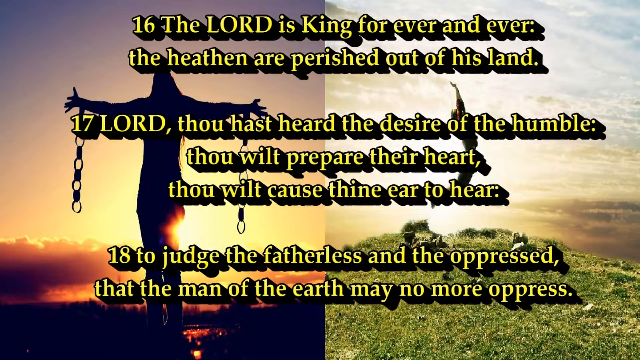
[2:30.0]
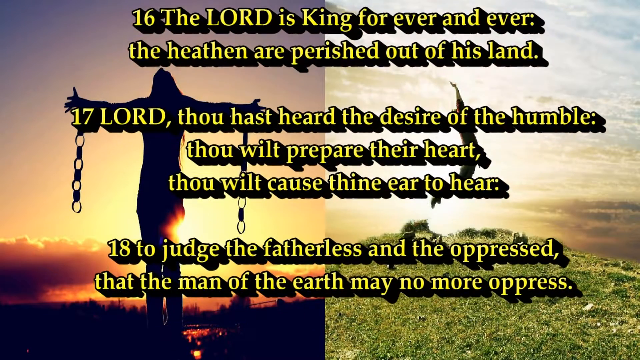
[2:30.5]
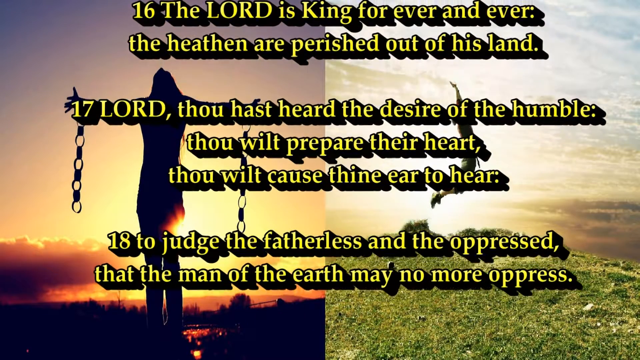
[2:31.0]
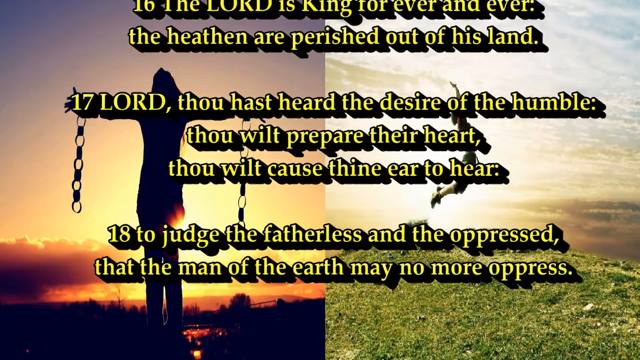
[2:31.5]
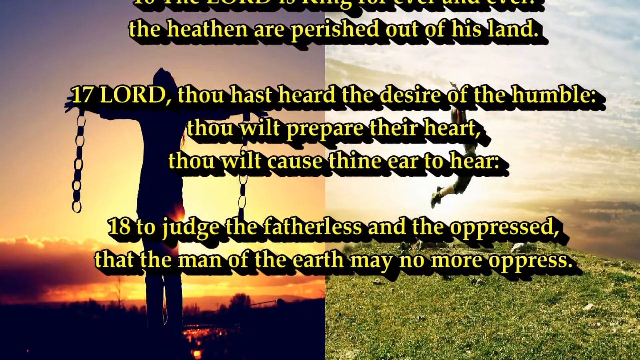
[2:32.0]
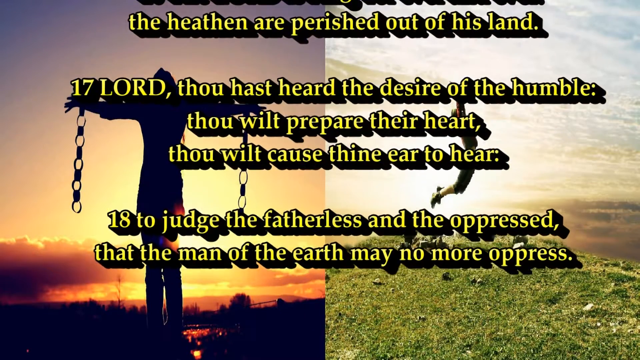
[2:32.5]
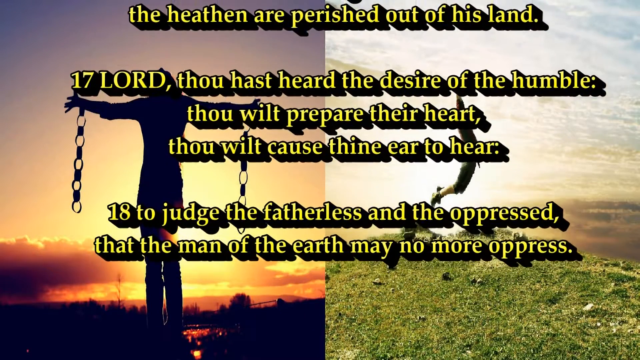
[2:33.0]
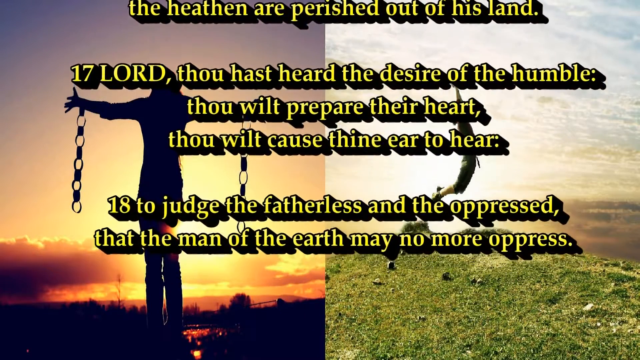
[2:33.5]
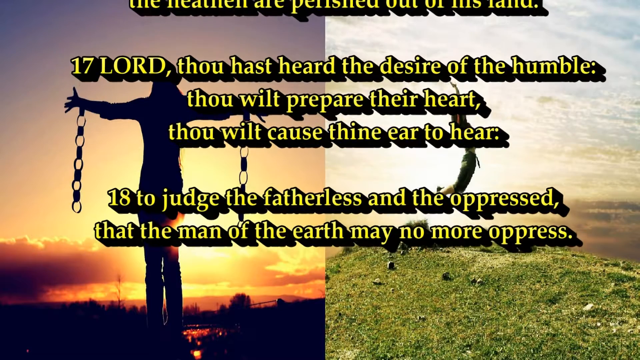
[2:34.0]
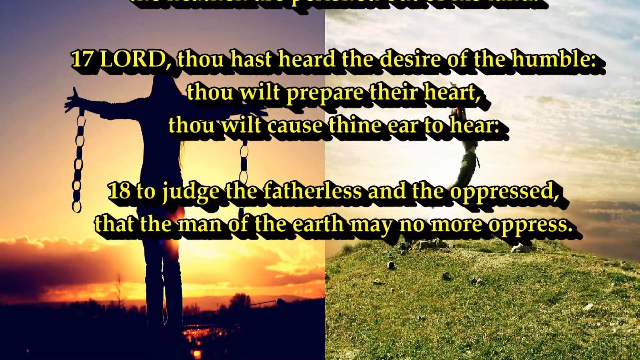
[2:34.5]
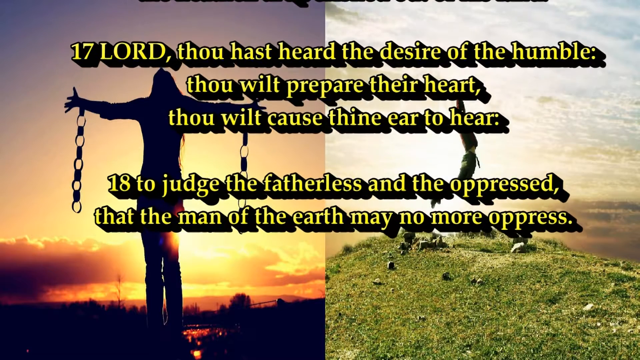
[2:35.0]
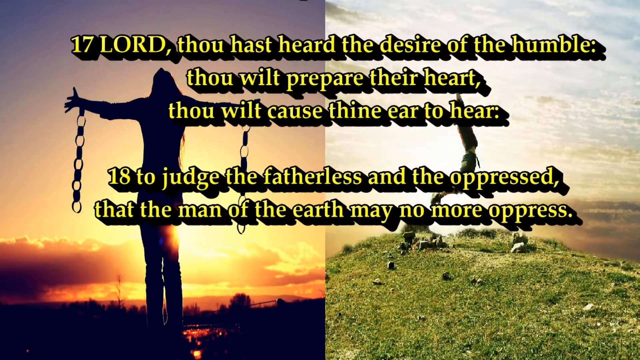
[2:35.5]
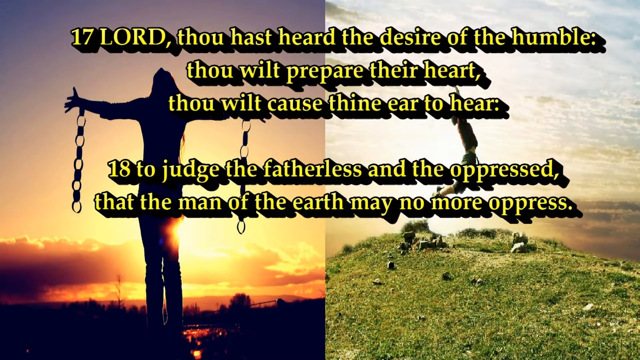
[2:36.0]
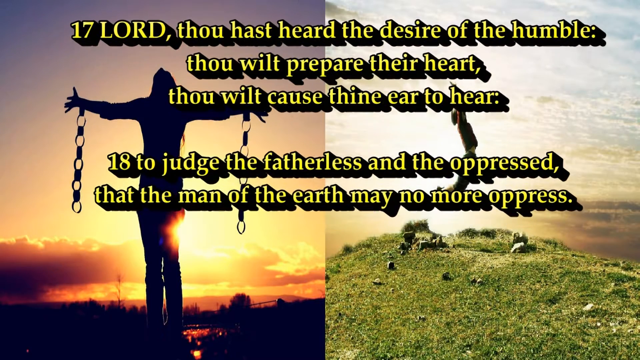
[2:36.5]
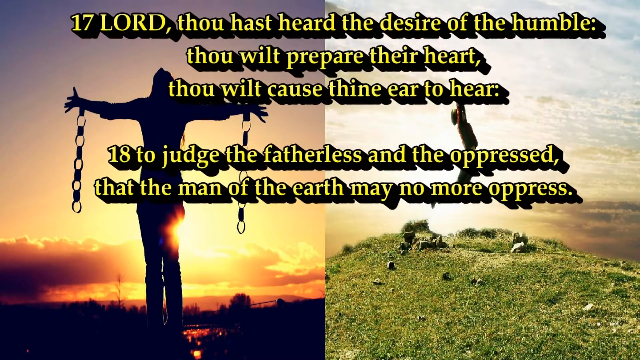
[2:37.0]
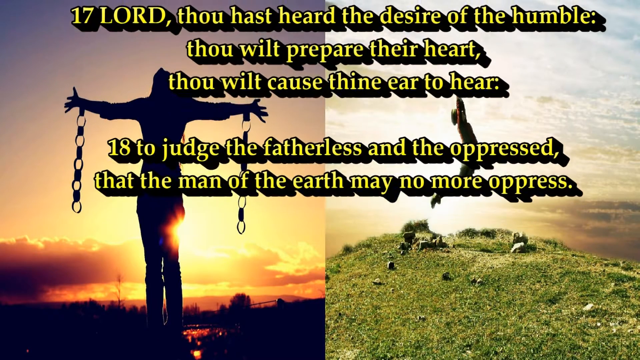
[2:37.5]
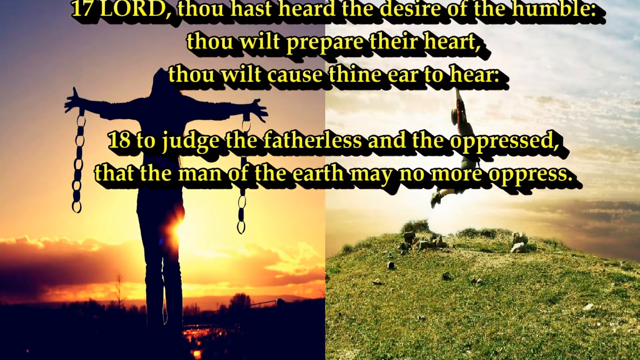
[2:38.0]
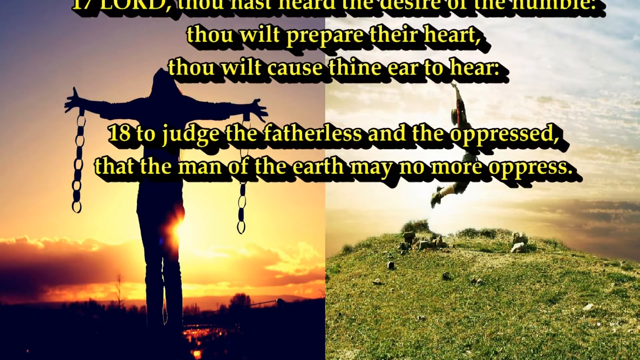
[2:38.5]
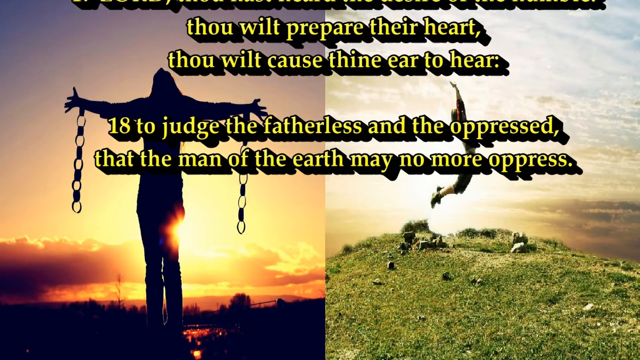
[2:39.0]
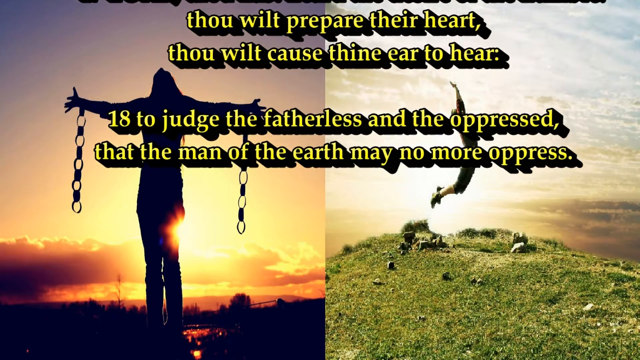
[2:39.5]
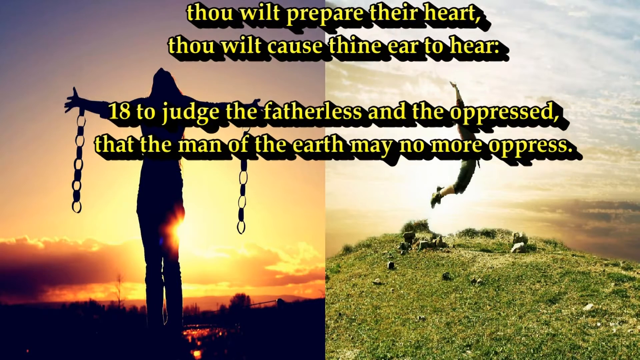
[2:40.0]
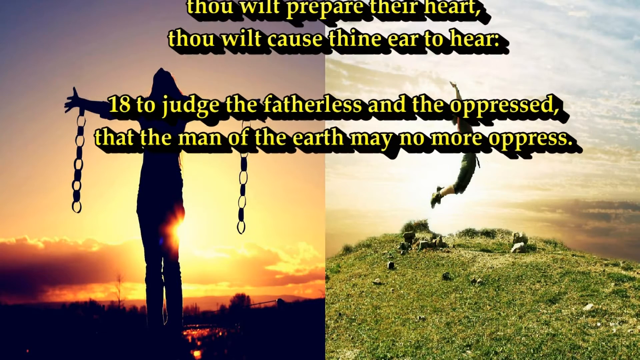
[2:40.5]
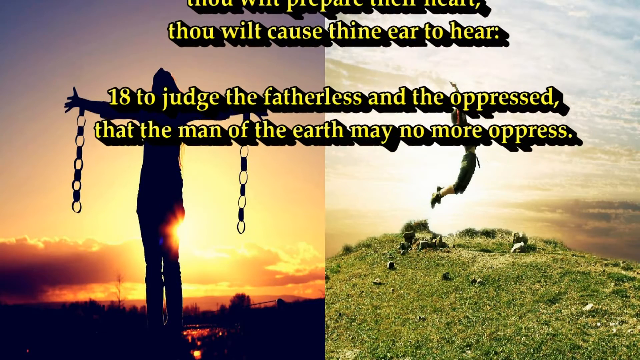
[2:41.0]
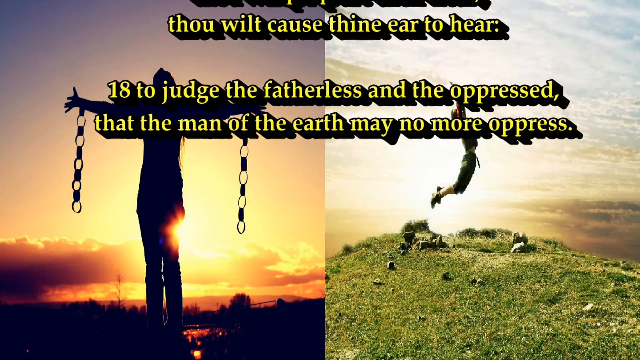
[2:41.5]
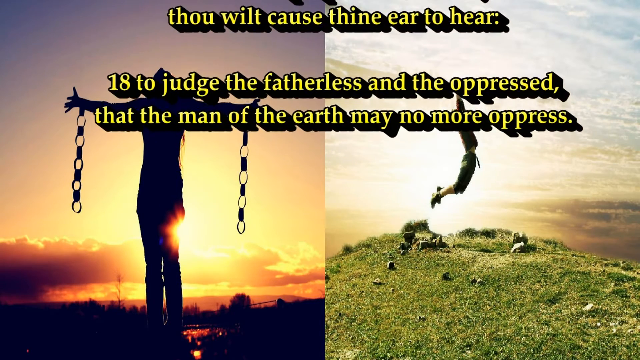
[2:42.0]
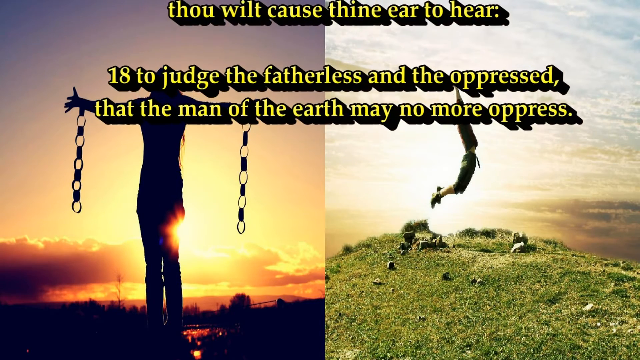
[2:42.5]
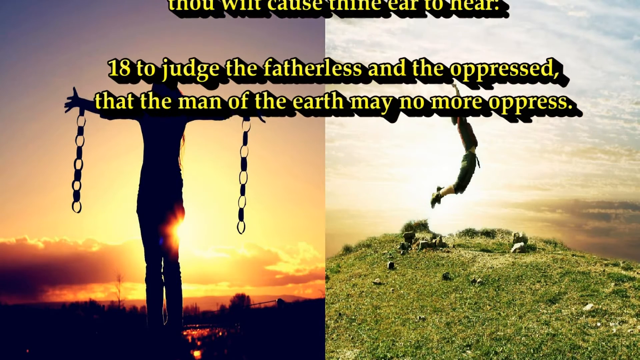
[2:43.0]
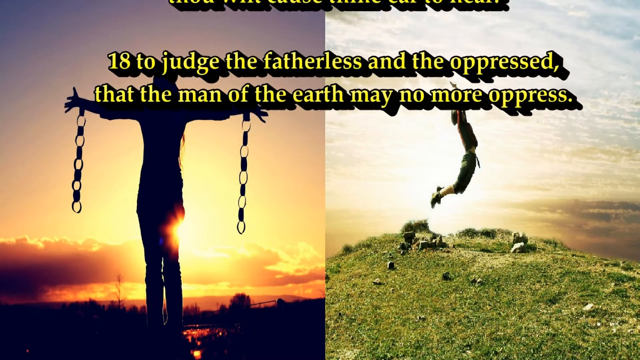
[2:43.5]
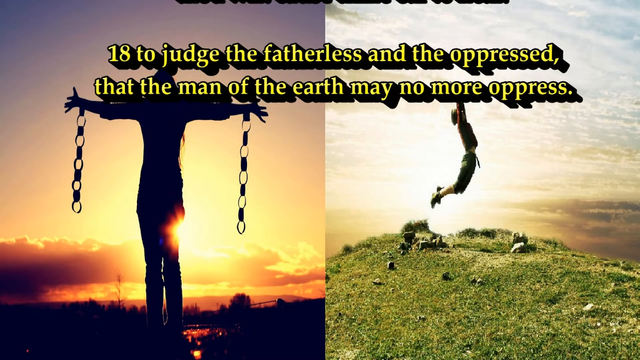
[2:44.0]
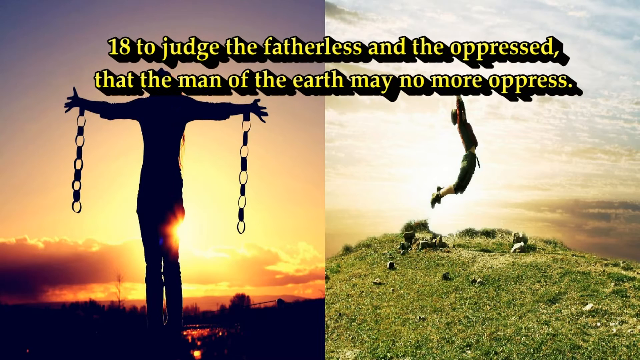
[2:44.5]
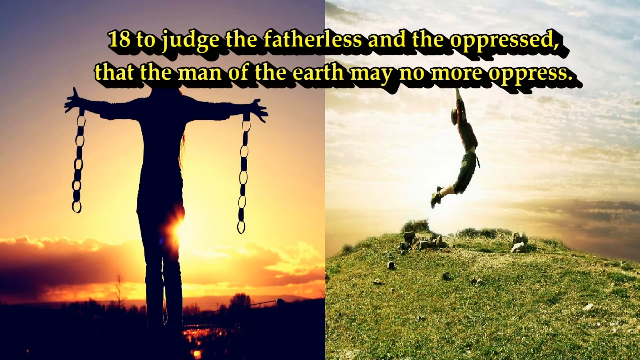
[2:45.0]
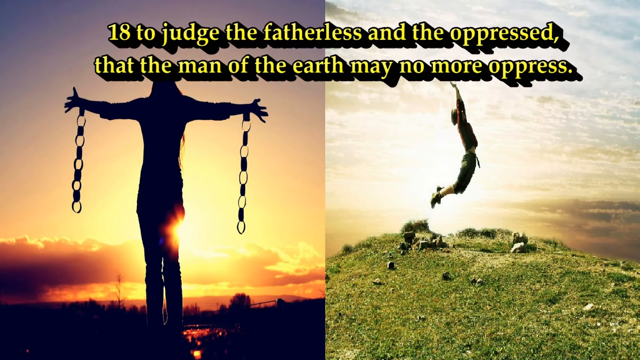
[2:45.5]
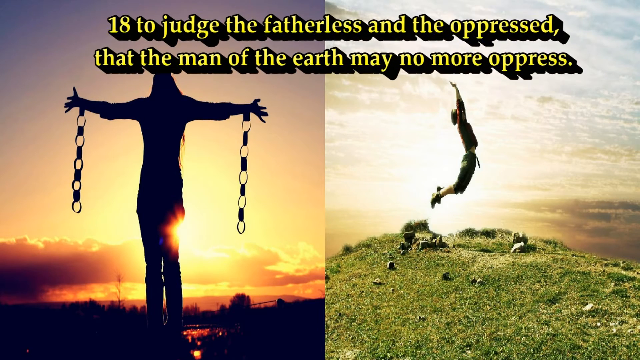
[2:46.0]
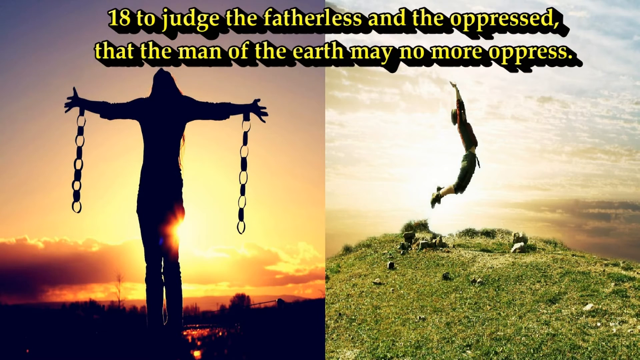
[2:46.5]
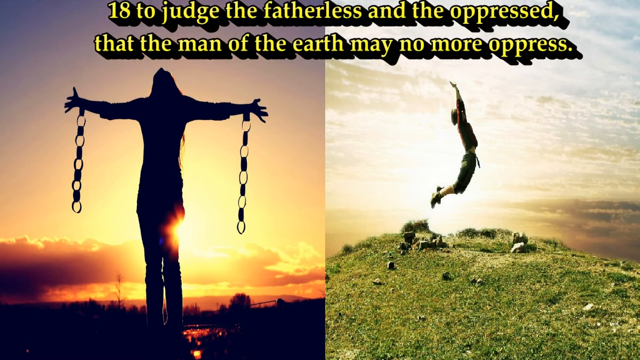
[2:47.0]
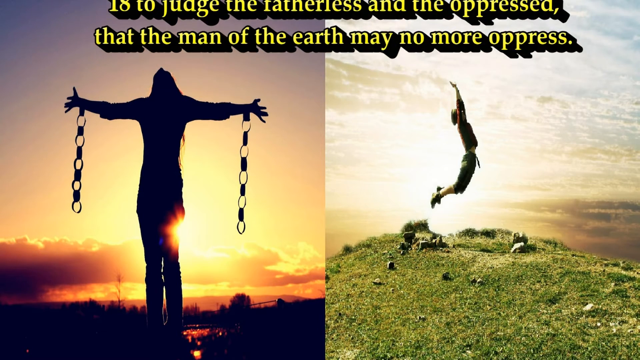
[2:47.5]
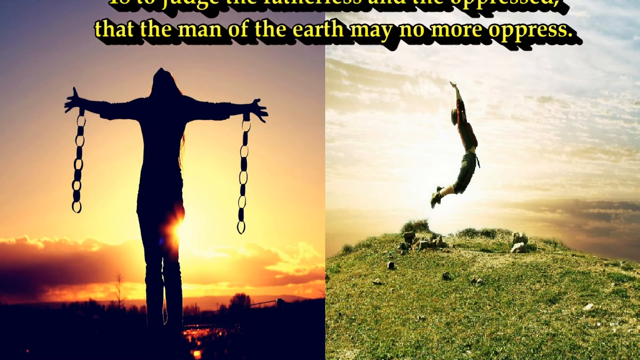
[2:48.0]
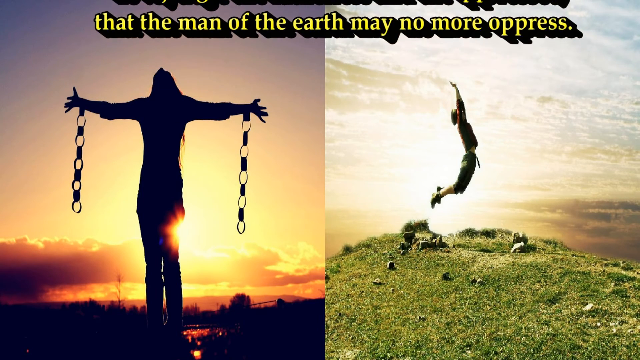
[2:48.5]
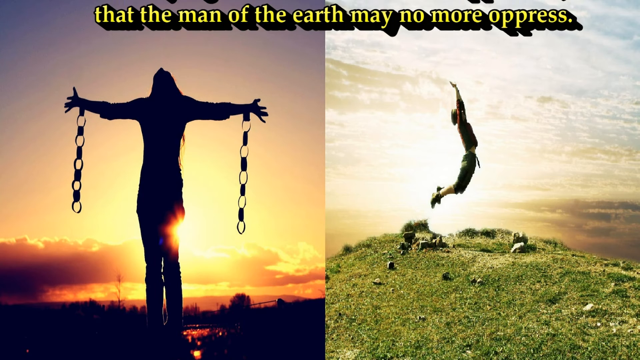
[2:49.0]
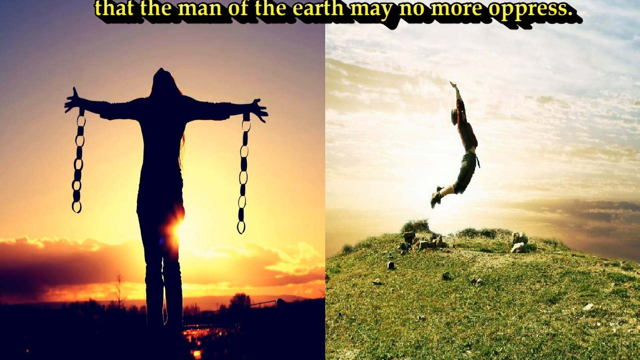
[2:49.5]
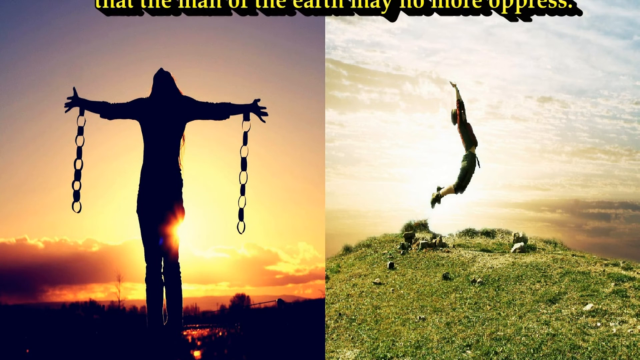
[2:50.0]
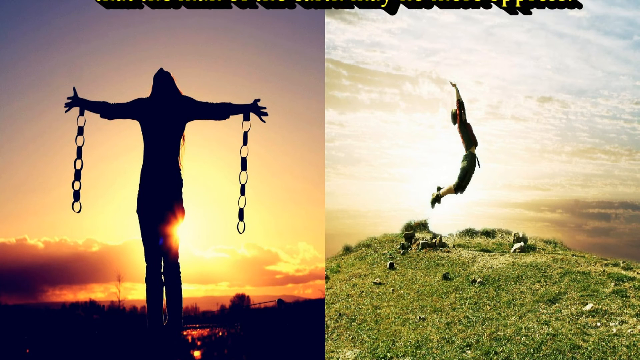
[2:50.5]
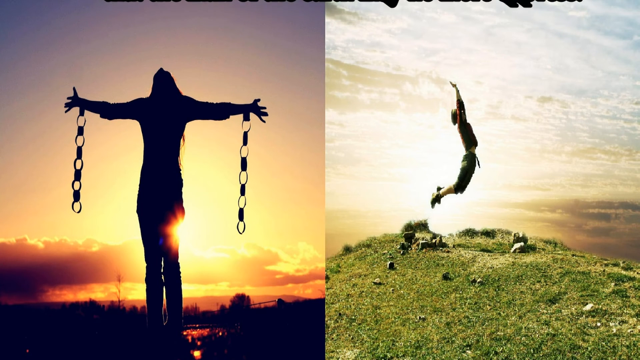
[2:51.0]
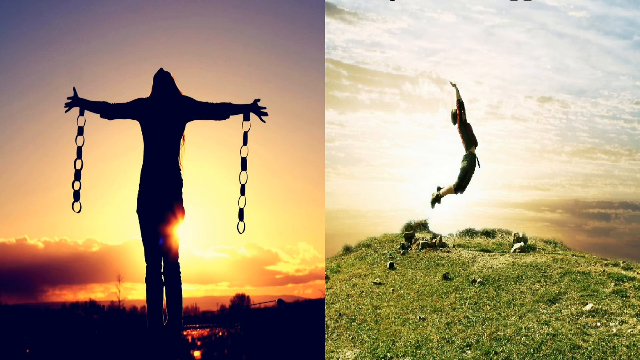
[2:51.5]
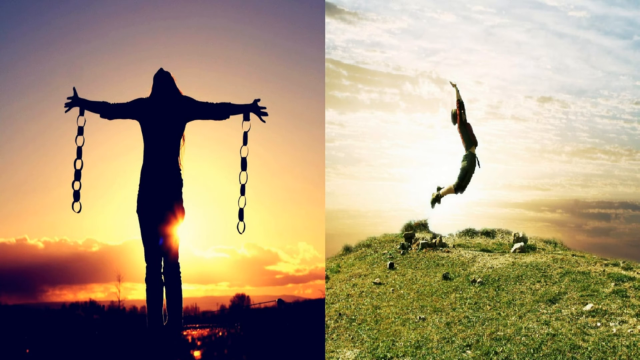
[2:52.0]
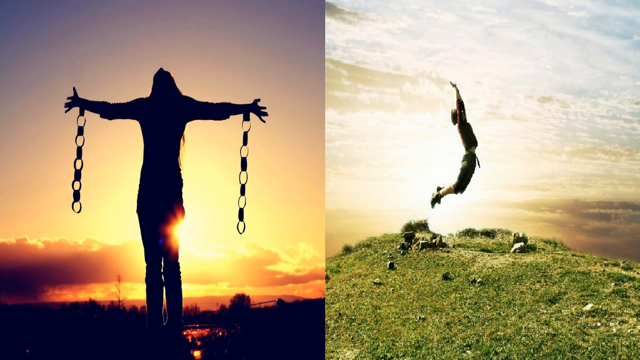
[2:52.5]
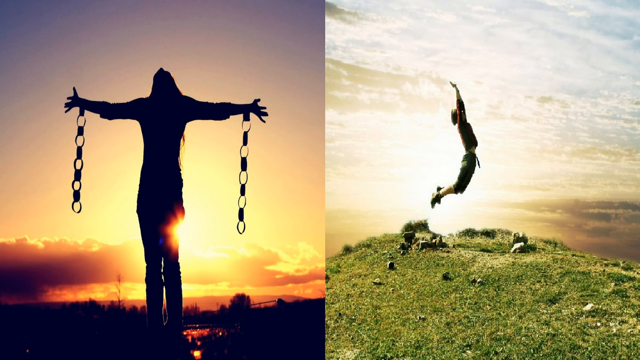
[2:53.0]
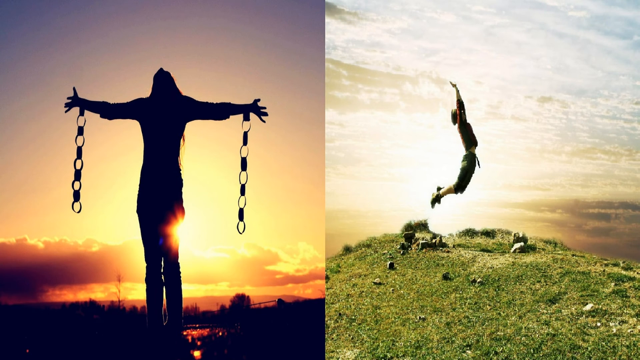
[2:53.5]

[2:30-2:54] The text begins at verse 17 of Psalm 10: "Lord, thou hast had the desire of the humble, thou wilt prepare their heart, thou wilt cause thine ear to hear." It goes through to the last verse, 18: "To judge the fatherless and the oppressed, that the men of the earth may no more oppress." Psalm 10 ends there. The picture of a man with open arms and chains hanging on his wrist is still there; he seems to be looking at the sunset, and there is an orange colour. On the right side, a man seems to have been standing on a hill with green grass, and since he is on top of the hill, the other part of that picture seems to be clouds.